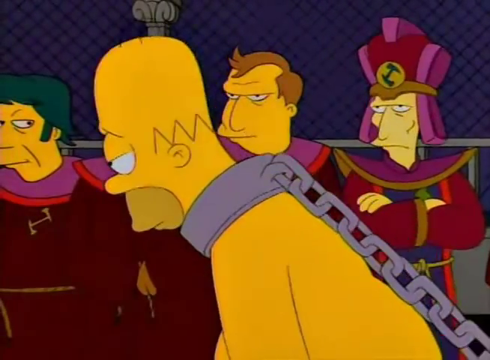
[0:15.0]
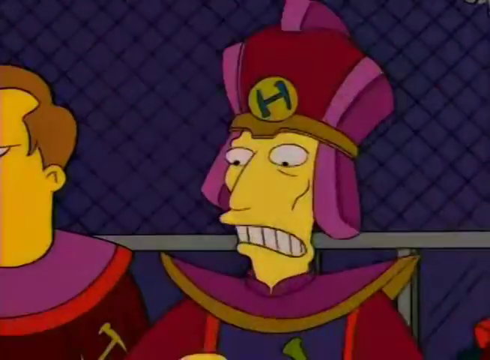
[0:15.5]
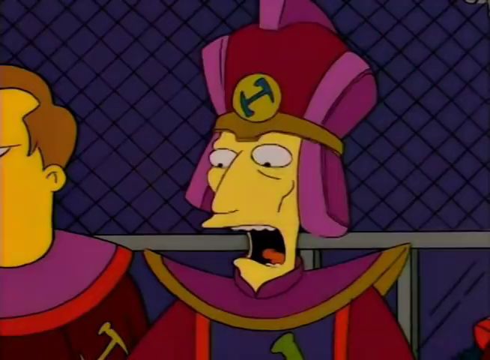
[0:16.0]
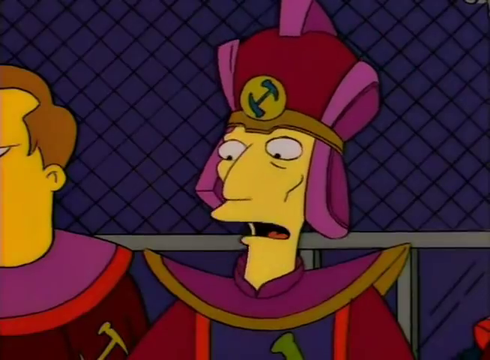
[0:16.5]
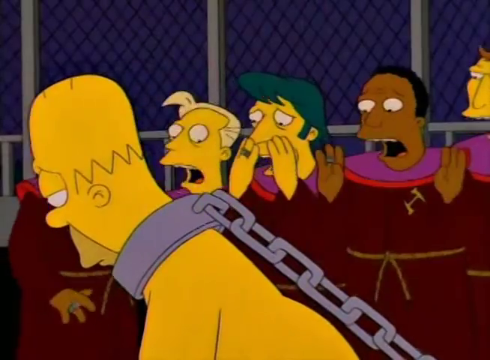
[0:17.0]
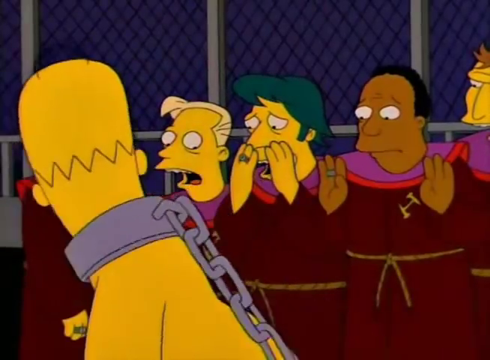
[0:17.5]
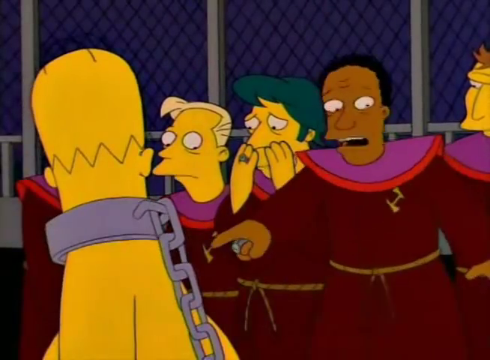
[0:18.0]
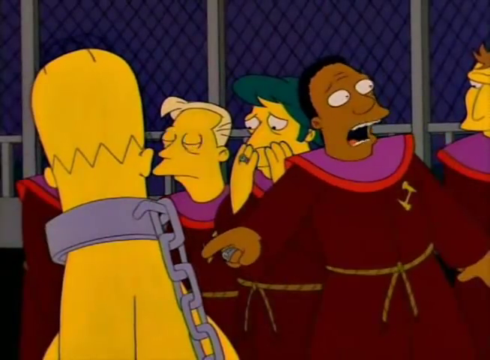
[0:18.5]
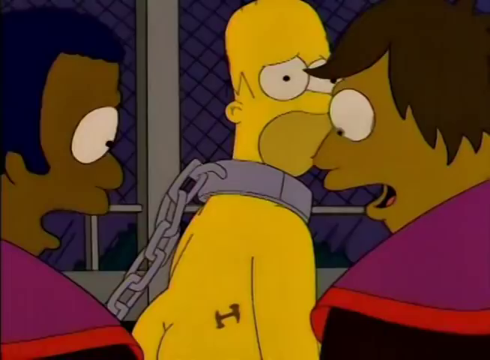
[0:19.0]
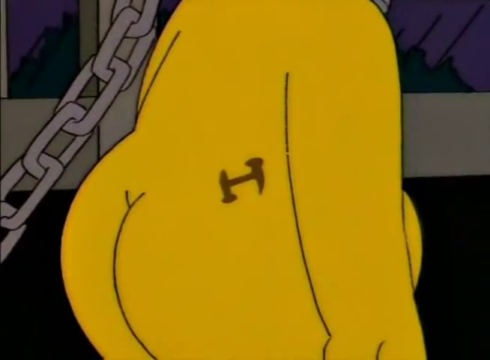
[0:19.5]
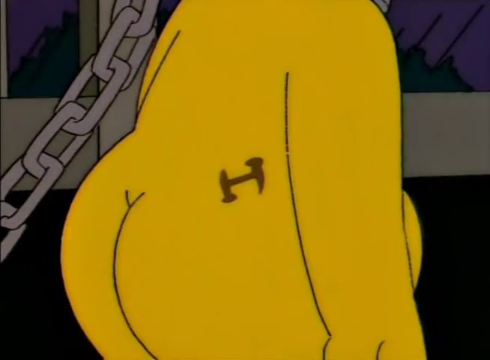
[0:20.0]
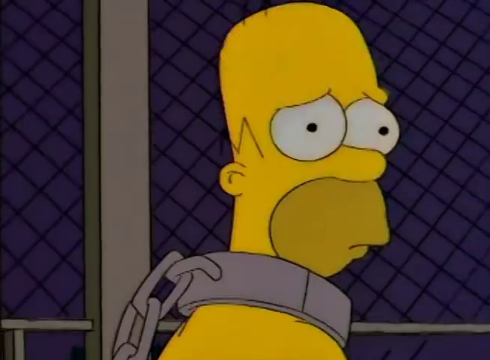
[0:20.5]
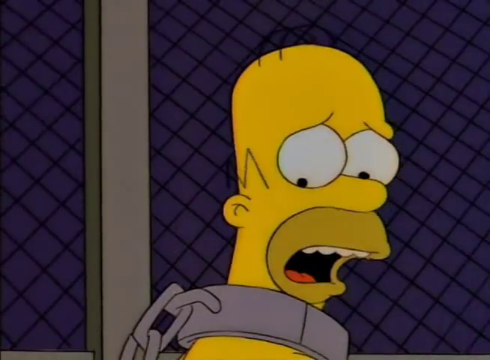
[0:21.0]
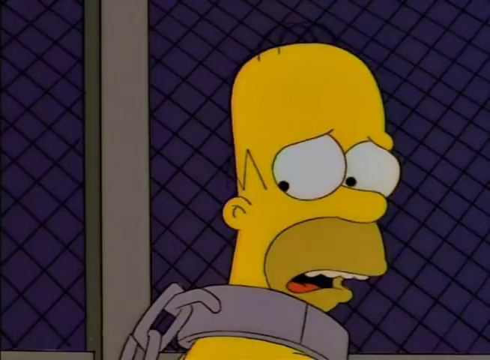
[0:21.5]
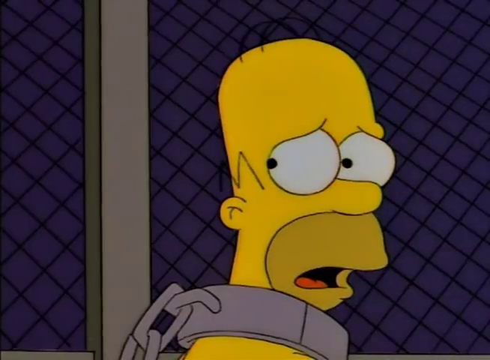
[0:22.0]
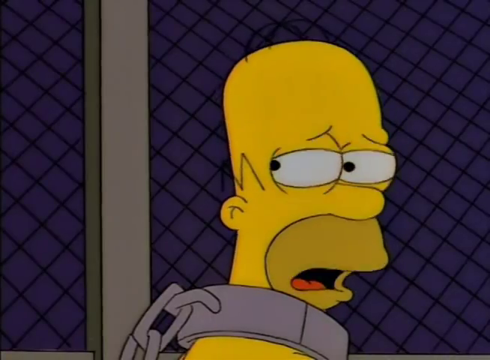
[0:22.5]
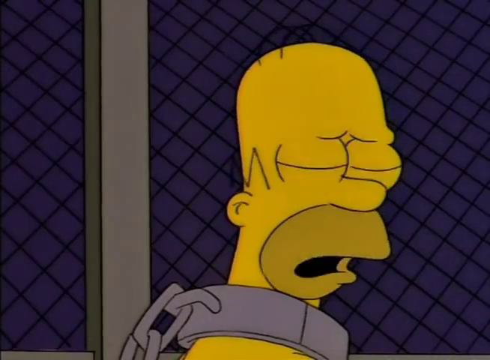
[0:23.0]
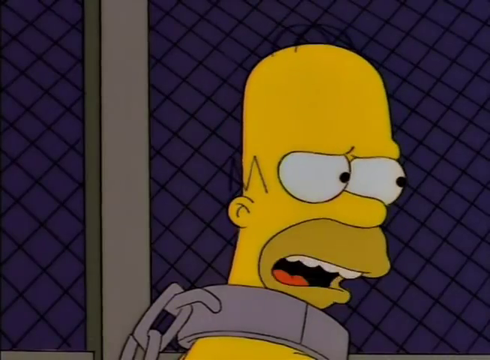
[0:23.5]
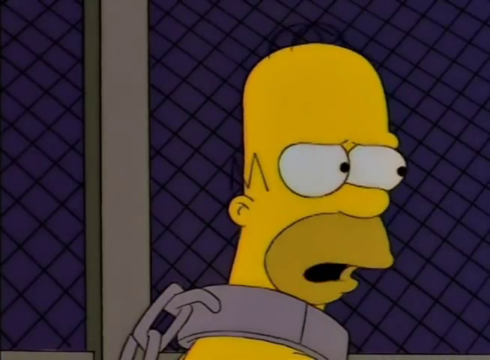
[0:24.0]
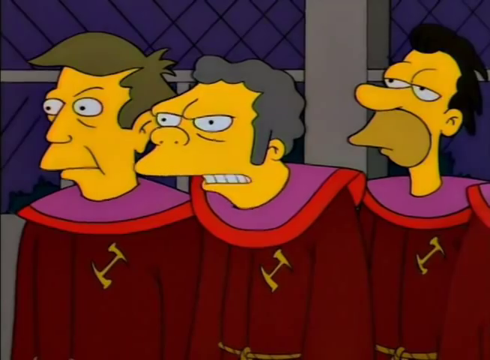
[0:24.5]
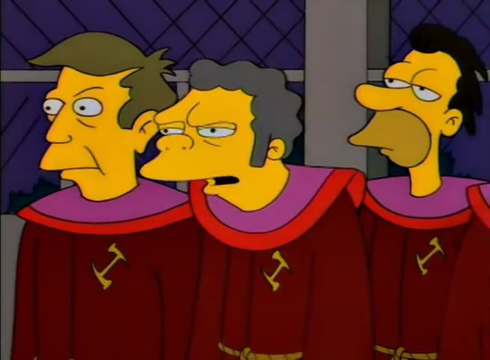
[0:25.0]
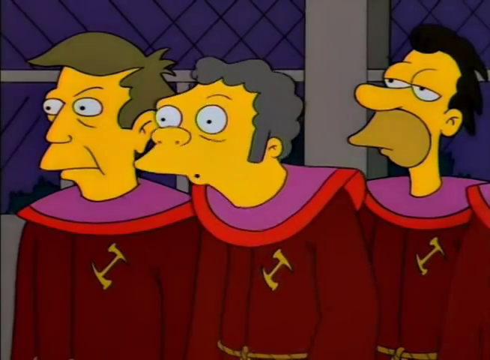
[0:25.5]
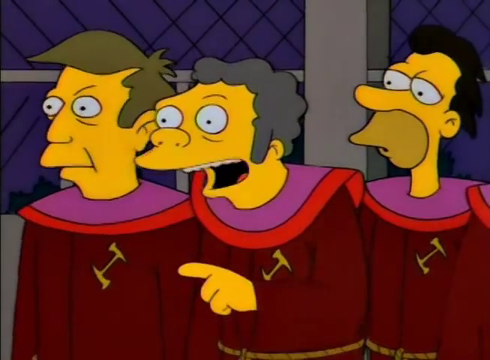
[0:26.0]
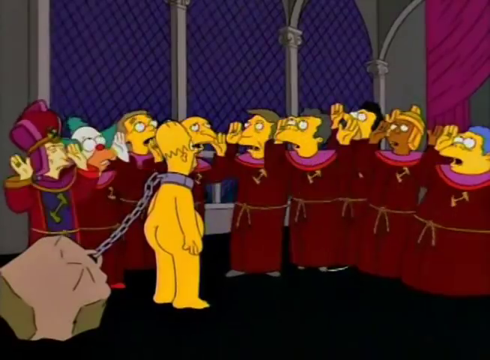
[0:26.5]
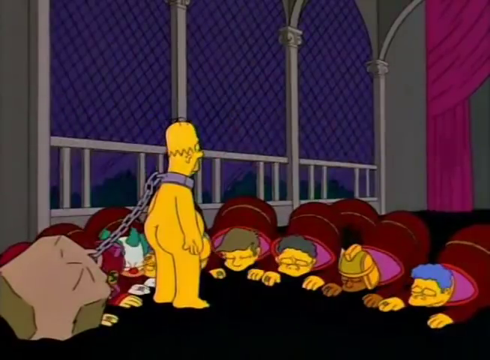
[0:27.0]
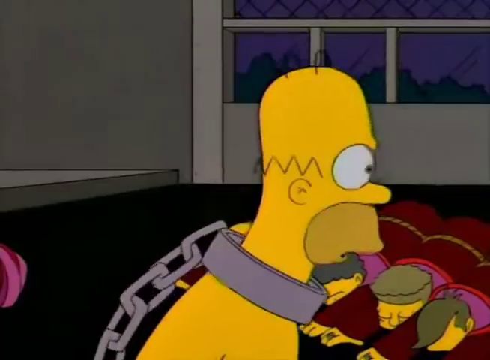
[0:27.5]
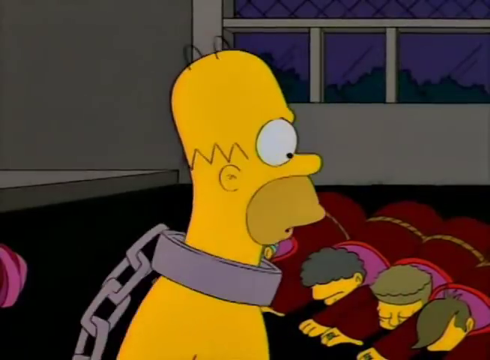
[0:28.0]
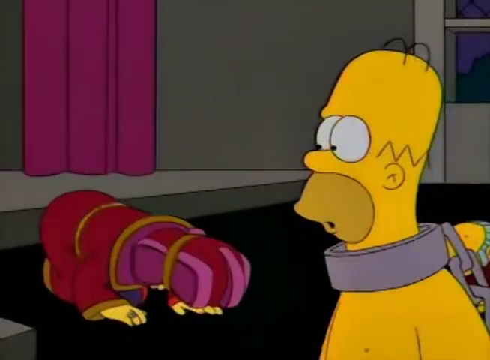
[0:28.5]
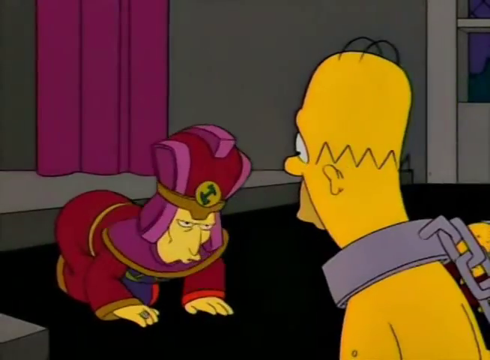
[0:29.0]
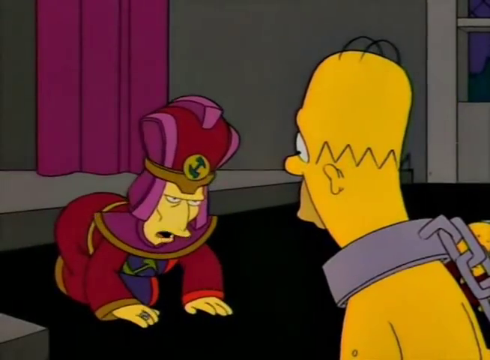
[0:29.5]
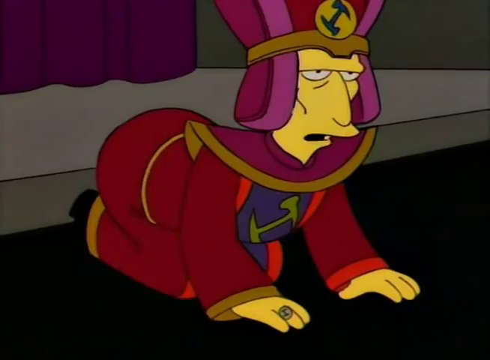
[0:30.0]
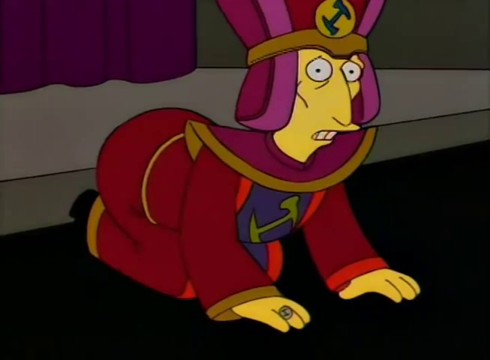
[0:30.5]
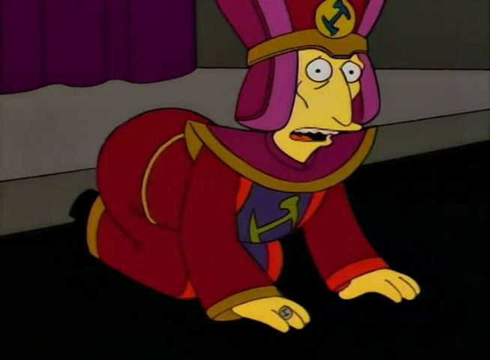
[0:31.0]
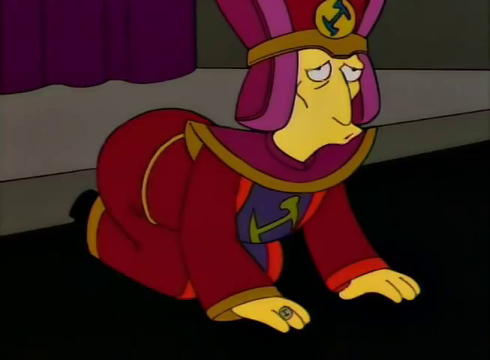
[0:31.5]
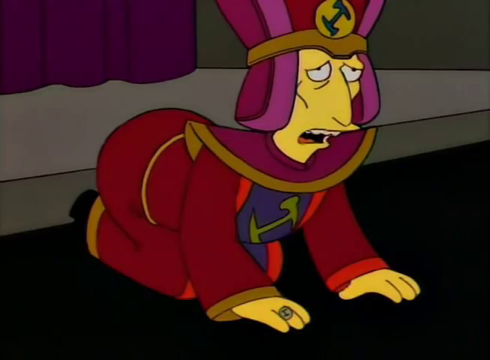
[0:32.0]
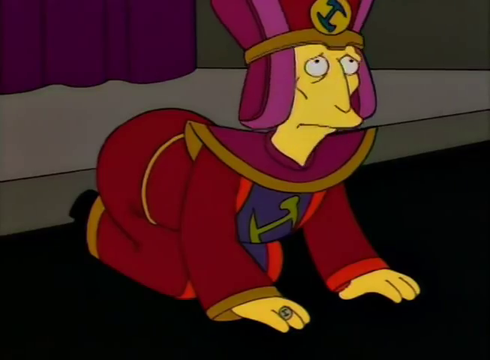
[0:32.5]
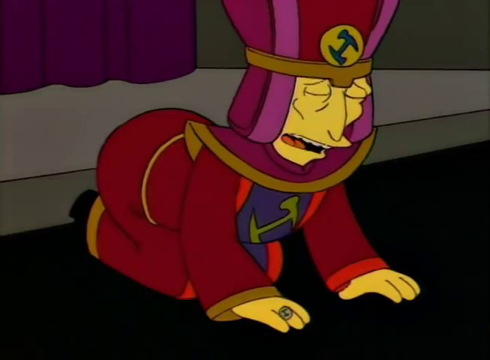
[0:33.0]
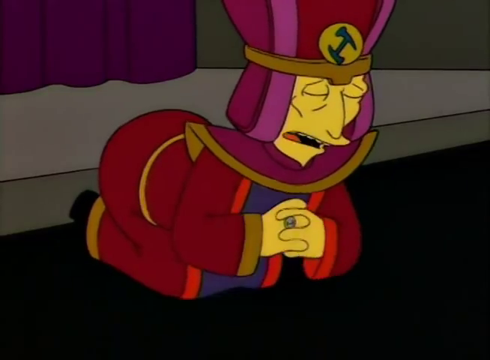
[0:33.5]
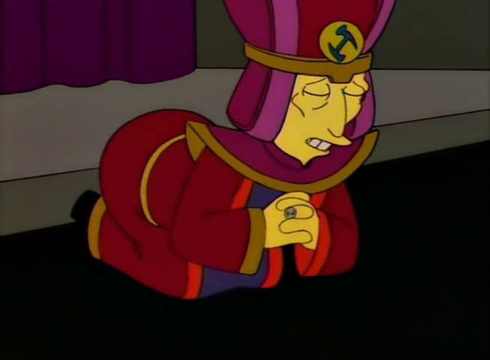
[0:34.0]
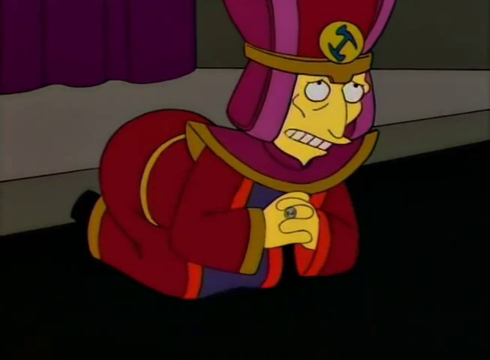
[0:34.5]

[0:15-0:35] Homer walks past a line of men dressed in purple, pink, and maroon robes. After he takes a couple of steps, one of the men, who has a hat on his head, yells out something and appears terrified. At that, all the other men in the row put their hands up with their mouths wide open, appearing startled, concerned, or scared about something. Homer continues walking, then turns to one of the men, who points at something on Homer's body that looks like a symbol. Homer looks down at the symbol and then at the men, appearing to explain what the symbol on his body means. The men then all bow down onto the floor as if to worship Homer, and Homer looks at them with a stunned look on his face.